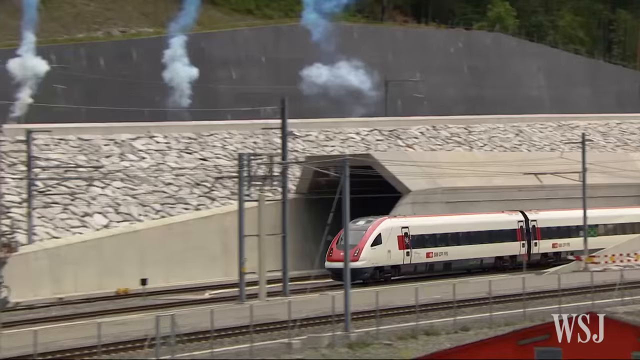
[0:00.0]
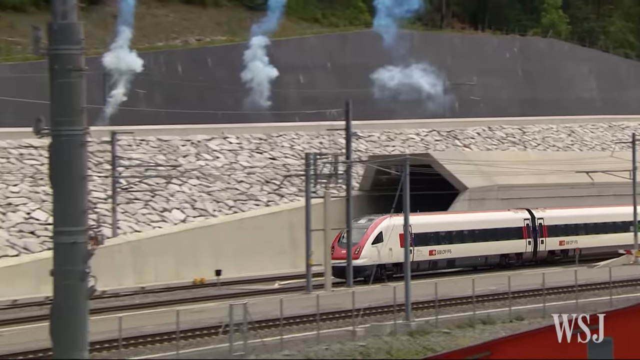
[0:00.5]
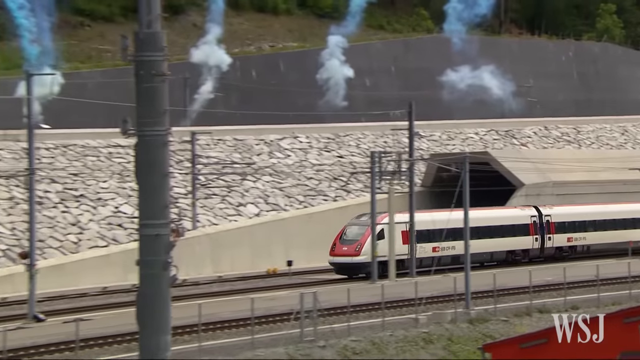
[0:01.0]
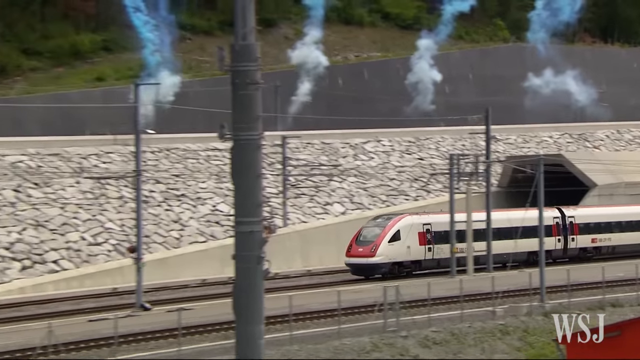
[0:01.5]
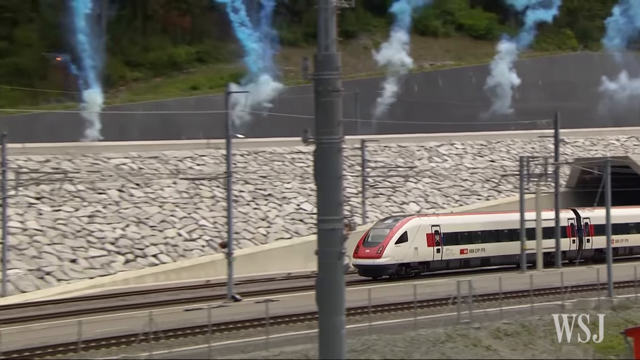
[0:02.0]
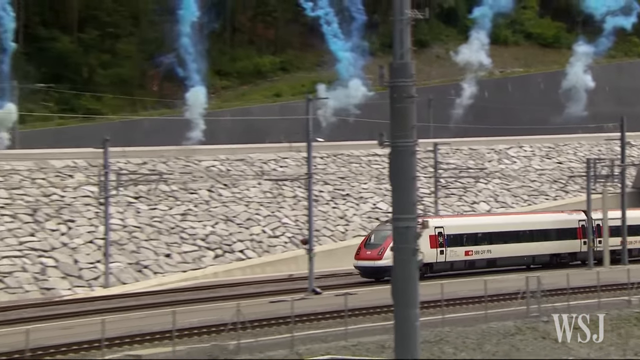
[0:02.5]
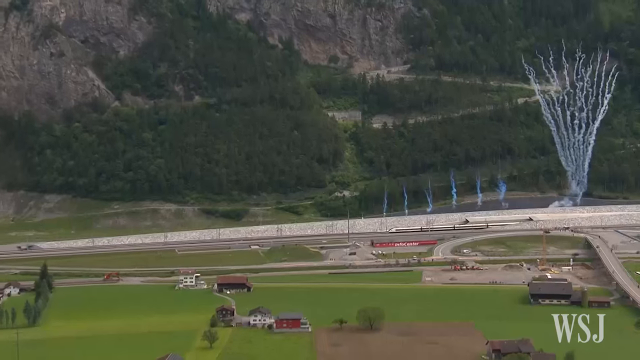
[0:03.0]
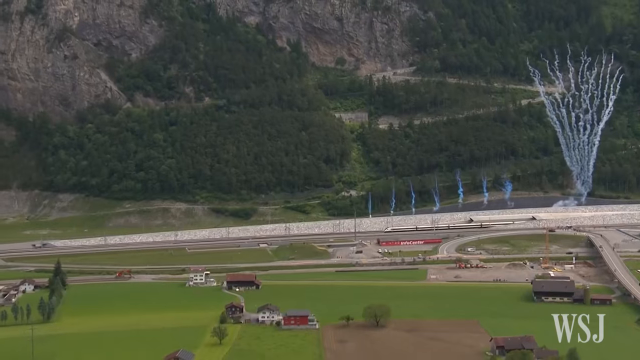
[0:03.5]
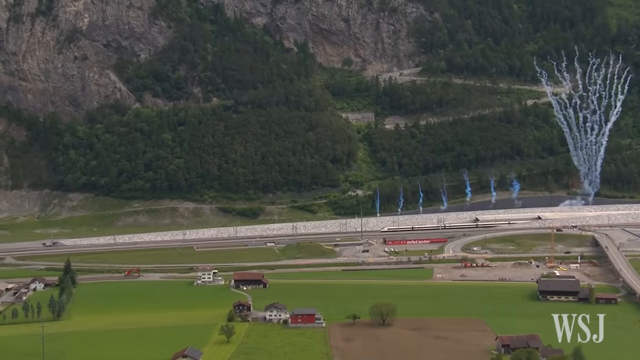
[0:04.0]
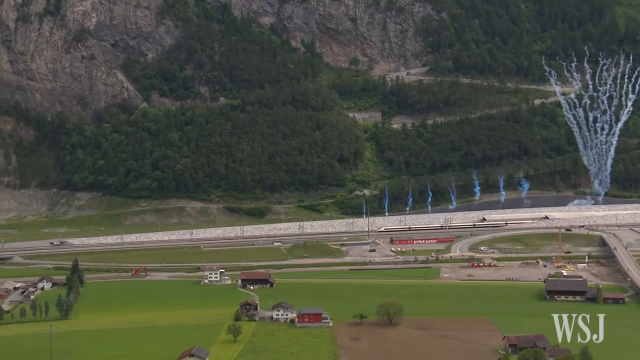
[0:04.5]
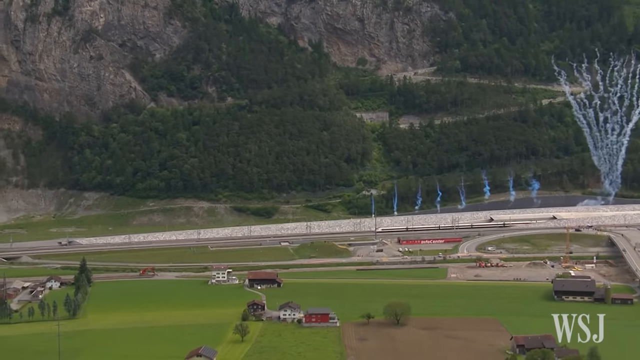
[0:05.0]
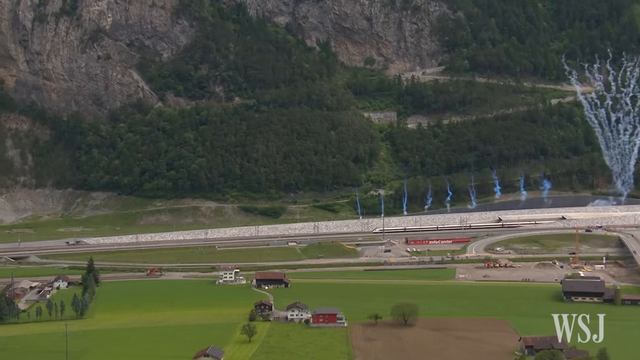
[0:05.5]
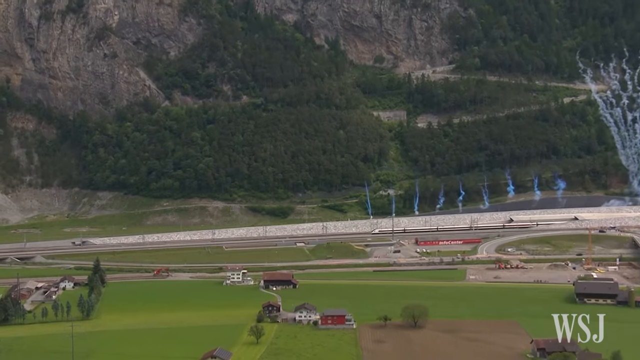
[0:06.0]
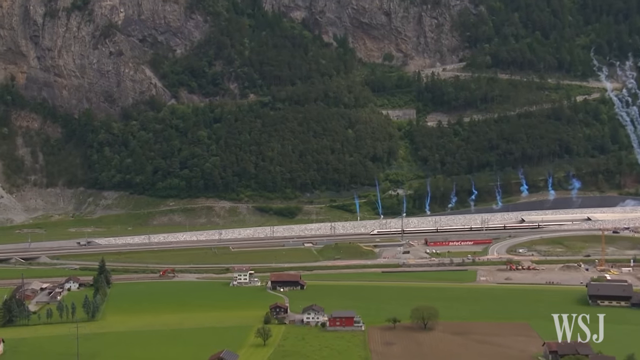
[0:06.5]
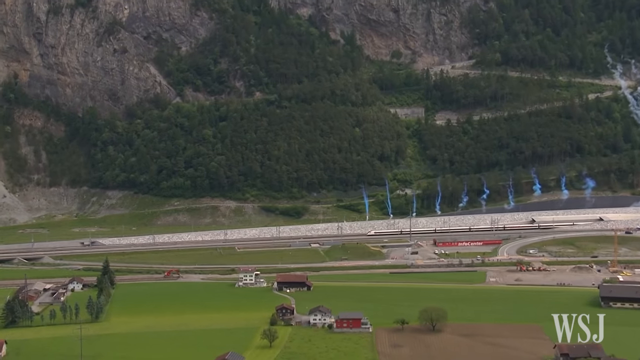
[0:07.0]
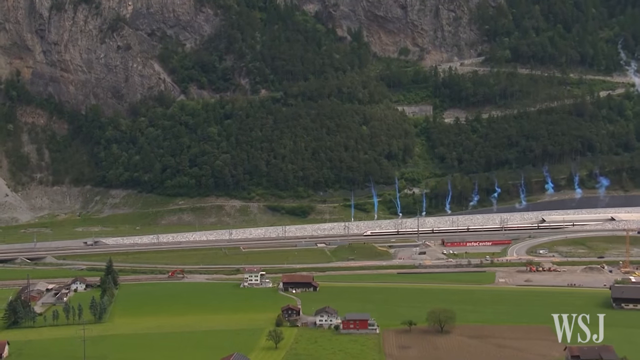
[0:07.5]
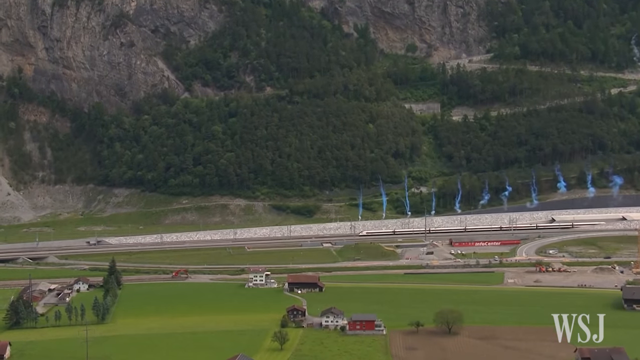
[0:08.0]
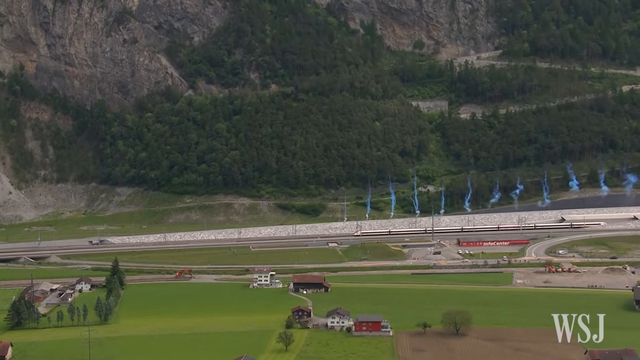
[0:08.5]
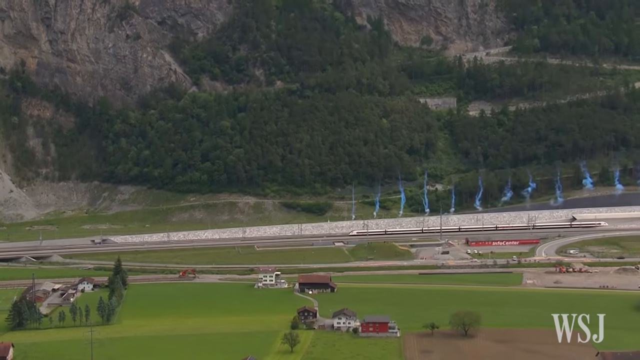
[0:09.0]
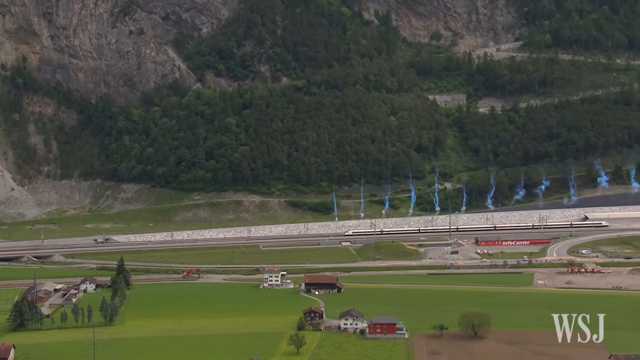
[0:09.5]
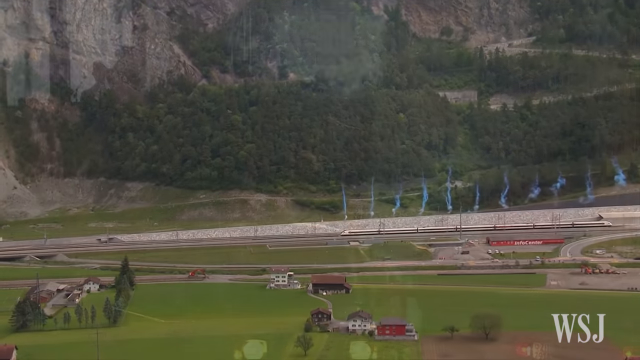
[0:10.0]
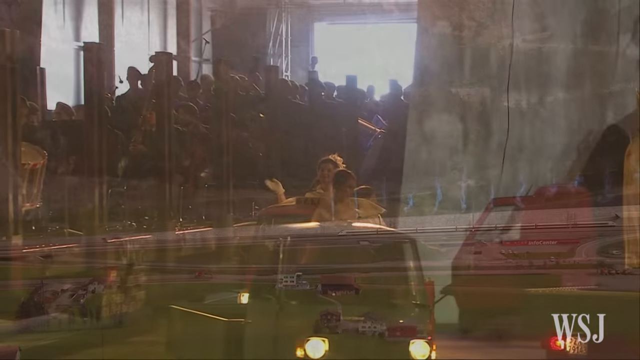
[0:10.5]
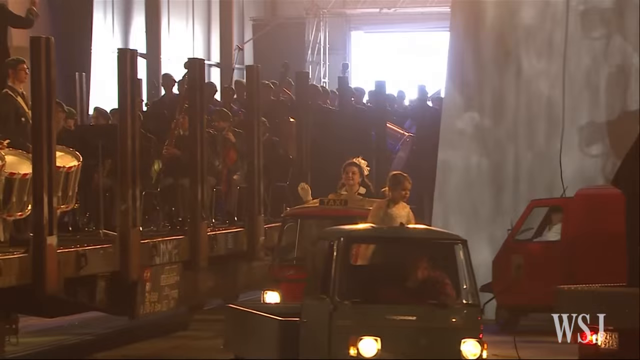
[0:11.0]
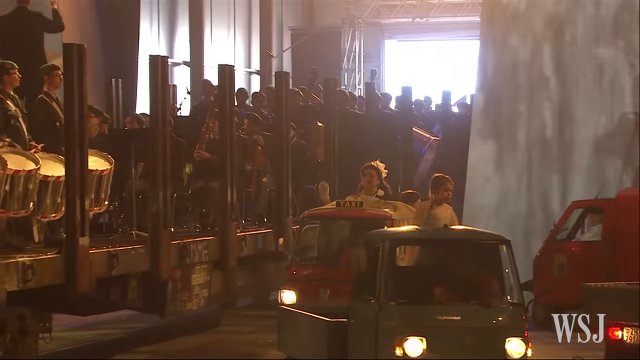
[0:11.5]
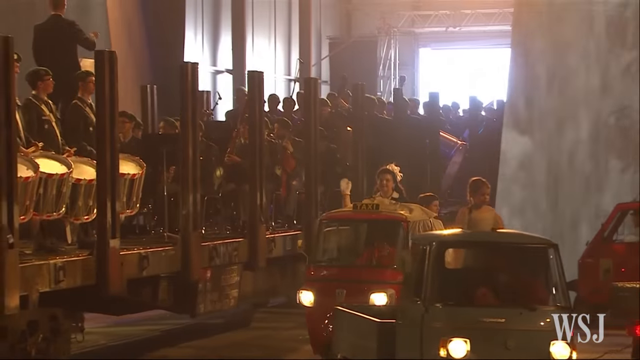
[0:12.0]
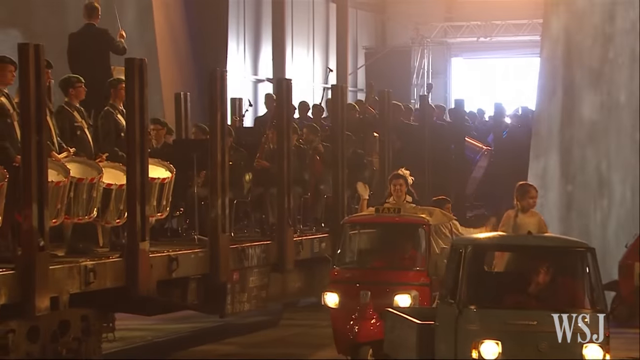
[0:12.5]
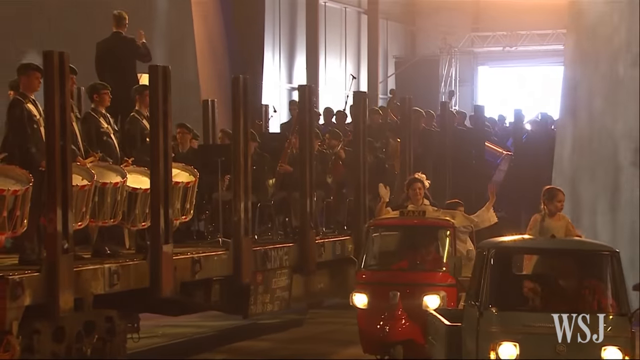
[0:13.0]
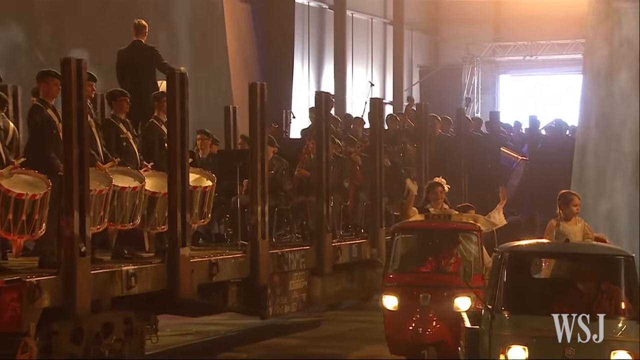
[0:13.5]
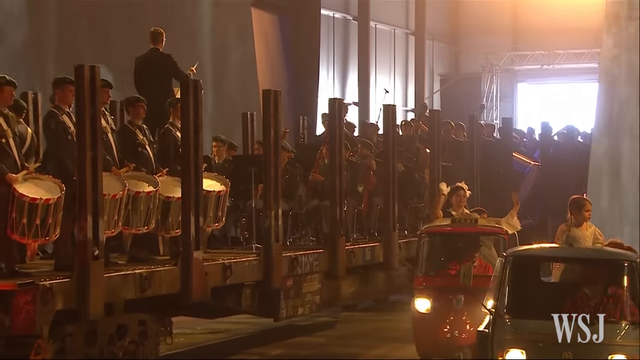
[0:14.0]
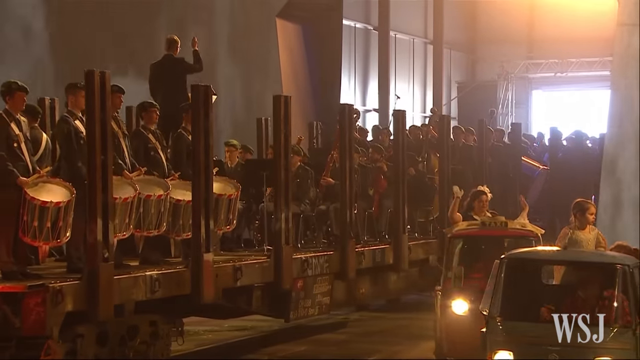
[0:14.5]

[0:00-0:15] A countryside scene shows a sleek-looking train, apparently a high-speed train, on rails, viewed from somewhat far away. Green hills are all around, and fireworks, green fields and houses are visible. Suddenly the scene changes to what seems to be an indoor area with a marching band. People who appear to be in costume ride on rides like kids, in what look like mini cars or mini trucks, apparently part of a parade of some sort. The people playing the instruments almost look as if they are riding in on a train or something similar.